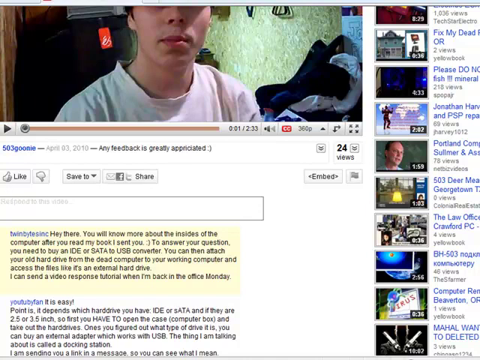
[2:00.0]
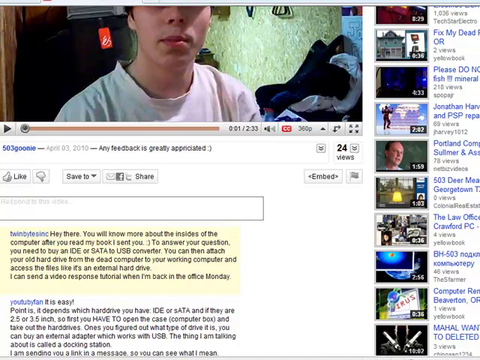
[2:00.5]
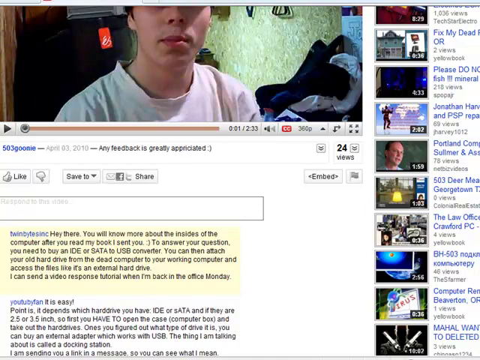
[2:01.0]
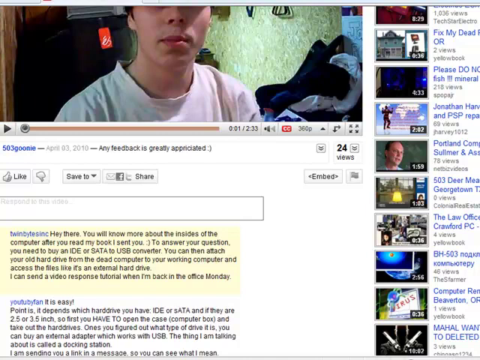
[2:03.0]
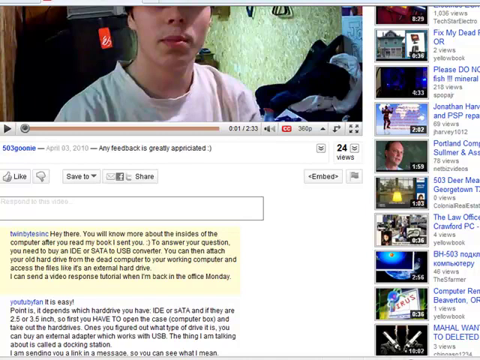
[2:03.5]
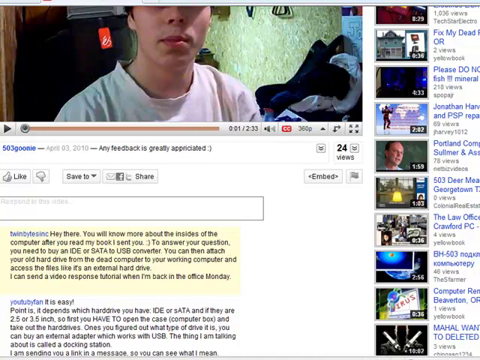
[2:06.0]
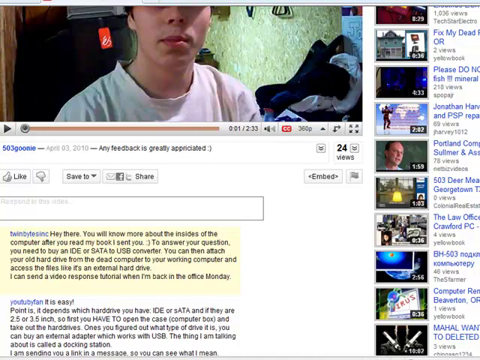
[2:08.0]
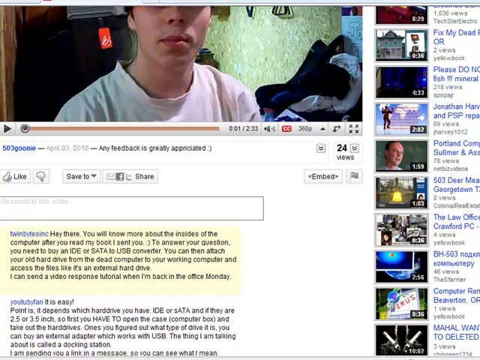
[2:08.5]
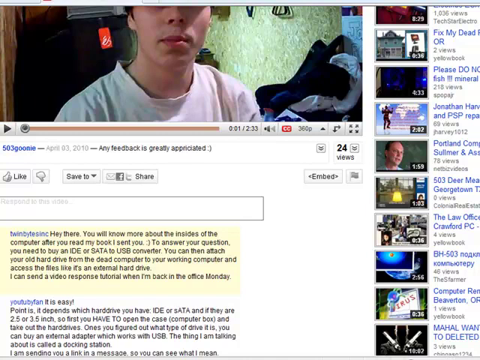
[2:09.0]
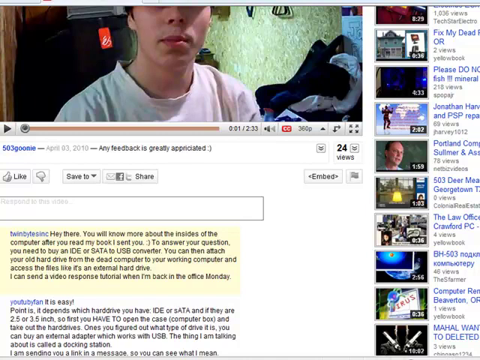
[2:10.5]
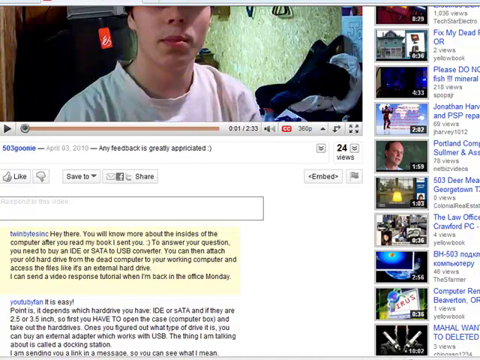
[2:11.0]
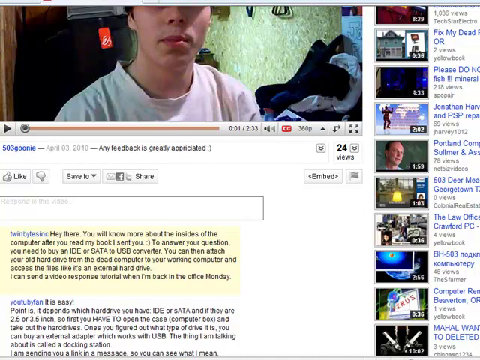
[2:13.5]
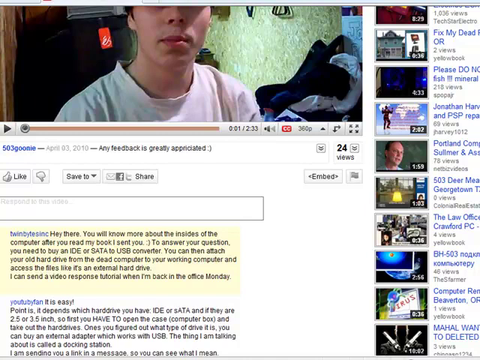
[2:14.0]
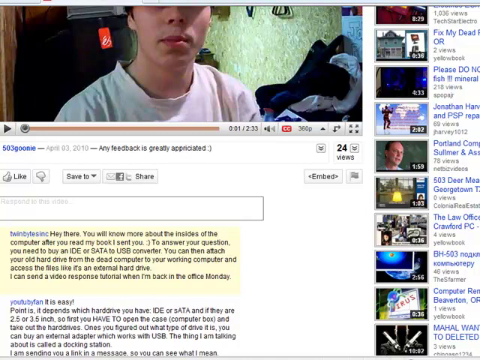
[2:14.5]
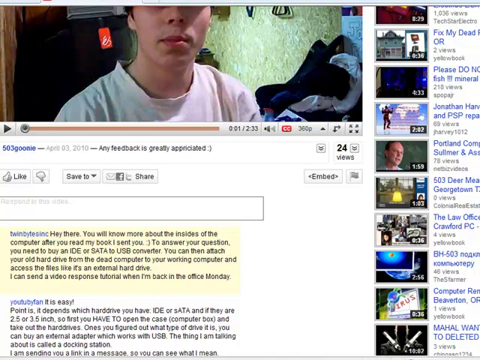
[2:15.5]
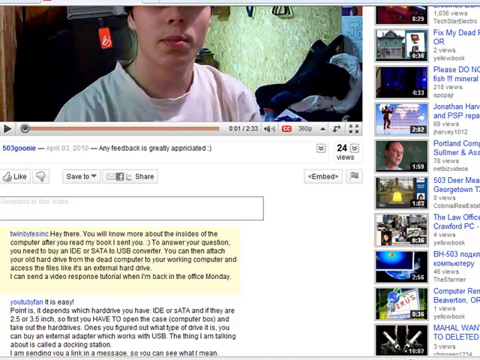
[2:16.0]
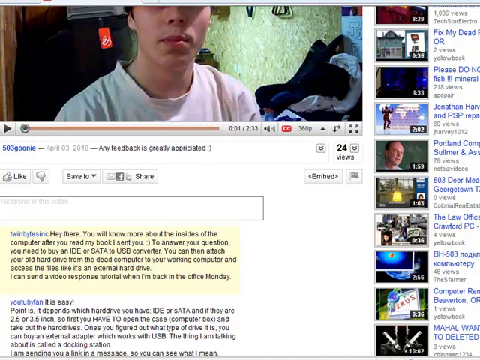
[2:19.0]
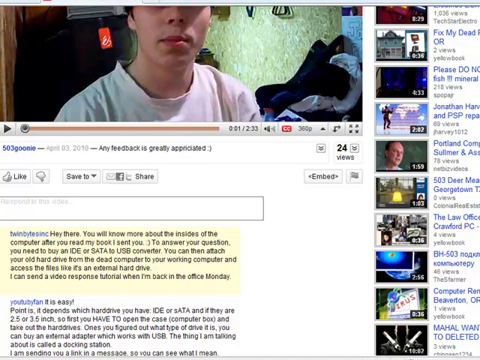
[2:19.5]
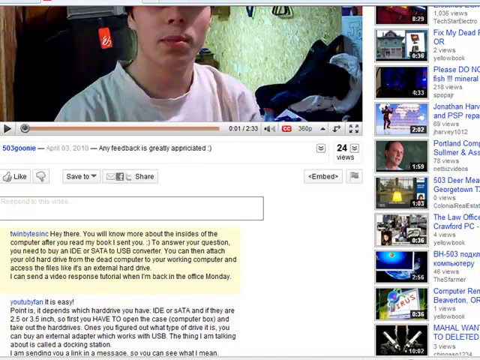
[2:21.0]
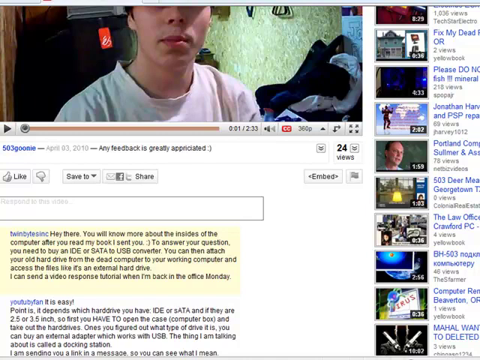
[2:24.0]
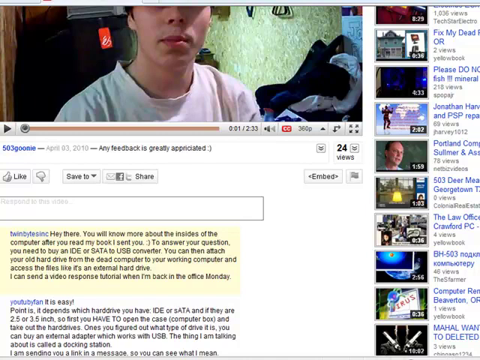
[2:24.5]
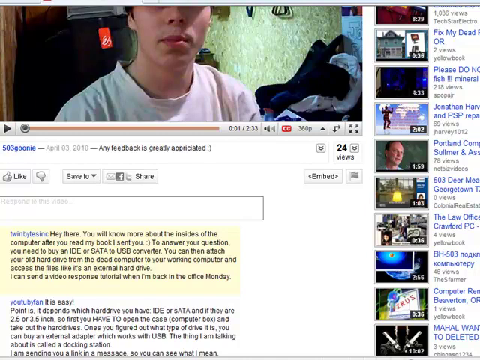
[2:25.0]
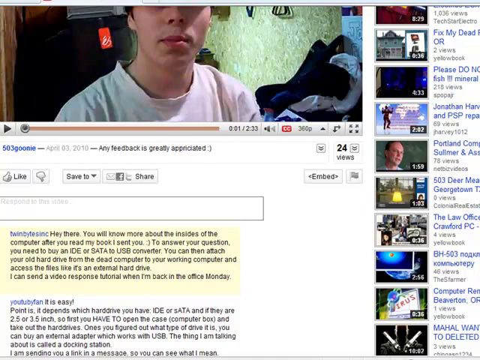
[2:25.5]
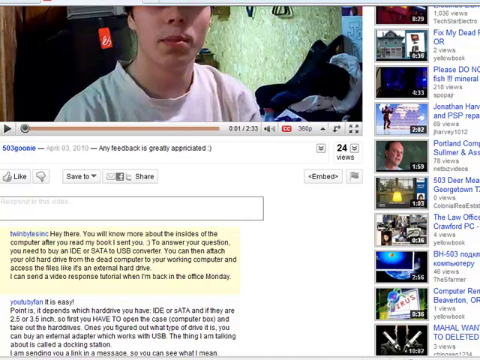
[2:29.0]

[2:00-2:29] For the final 29 seconds there is no movement at all. The still shows the bottom half of the video, the top half of the screen, and two of the comments below the YouTube video. The only change since the beginning of the video is that the view count has increased from 23 views to 24 views. The footer at the bottom of the video shows it is at 360p resolution, and the old YouTube player still has the red CC closed captions icon at the bottom.